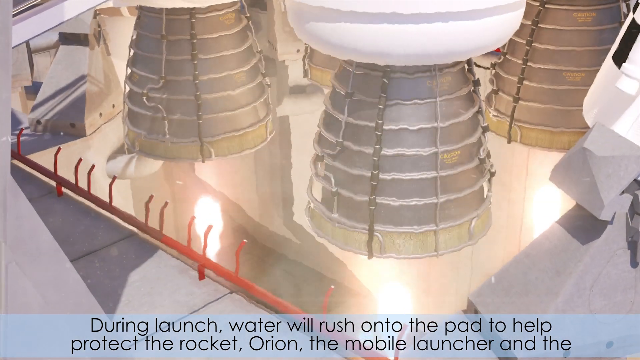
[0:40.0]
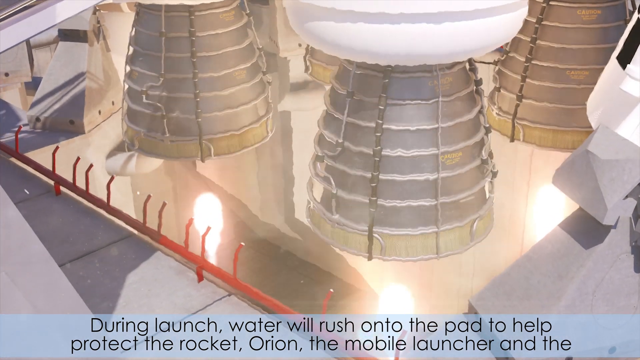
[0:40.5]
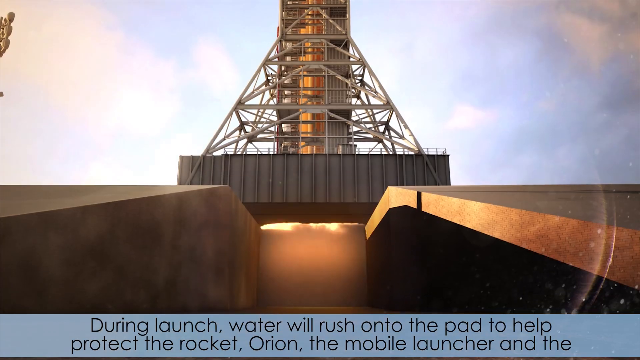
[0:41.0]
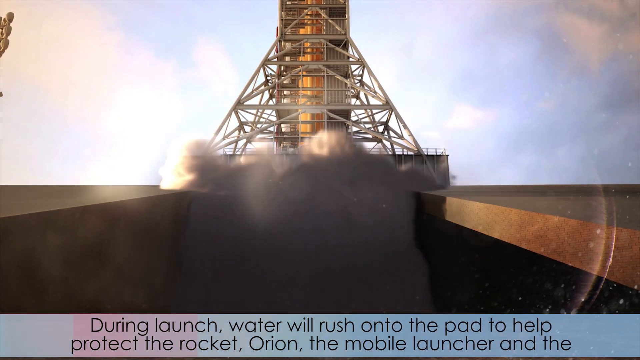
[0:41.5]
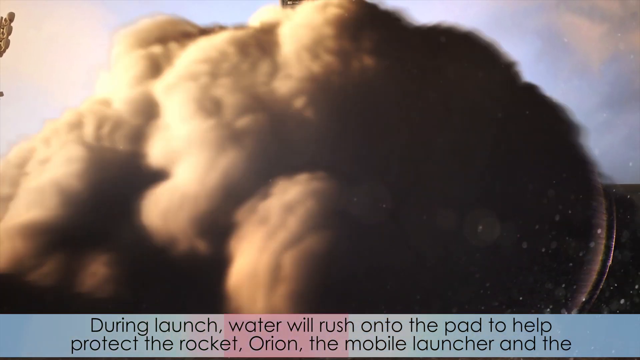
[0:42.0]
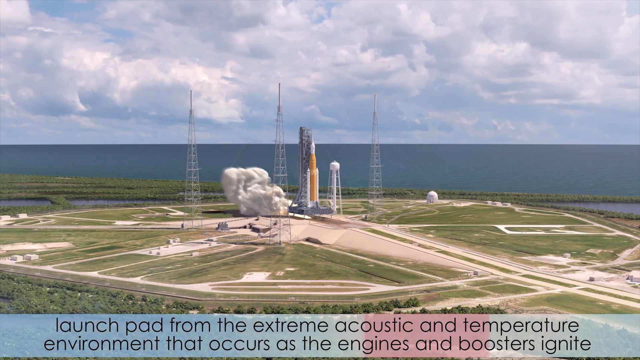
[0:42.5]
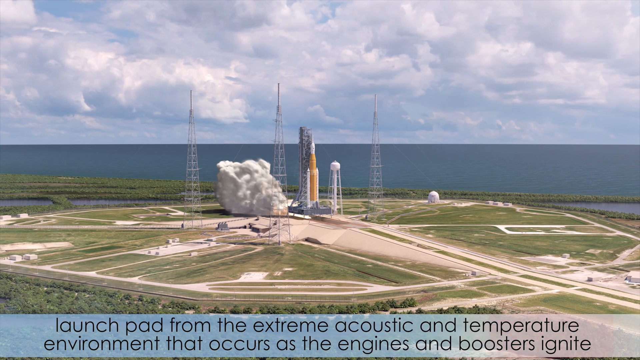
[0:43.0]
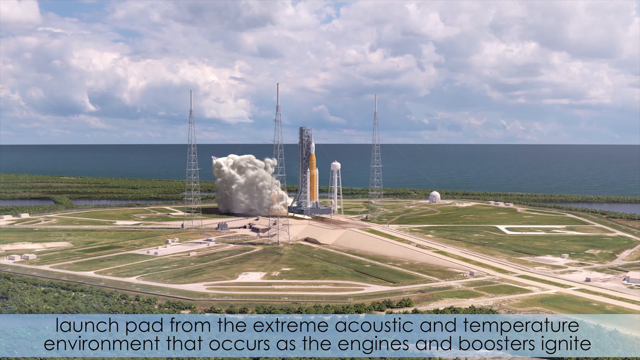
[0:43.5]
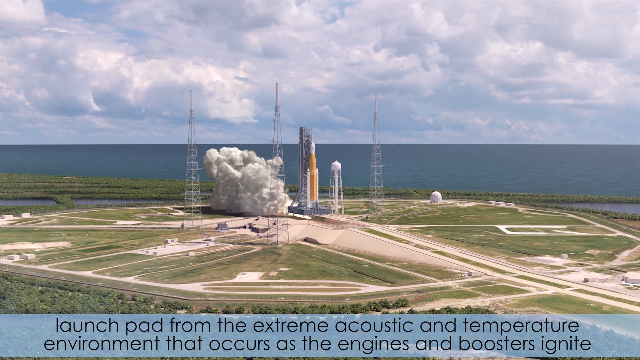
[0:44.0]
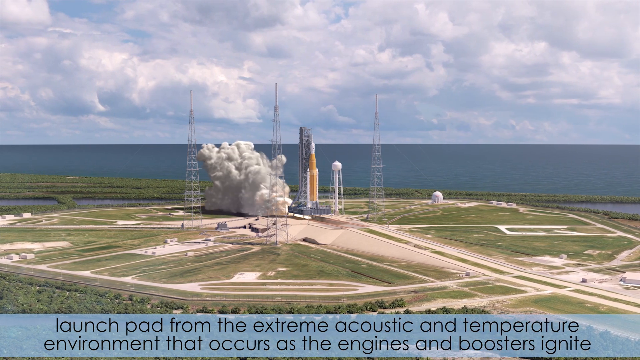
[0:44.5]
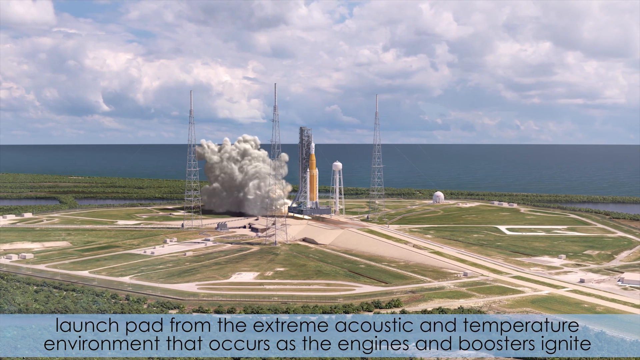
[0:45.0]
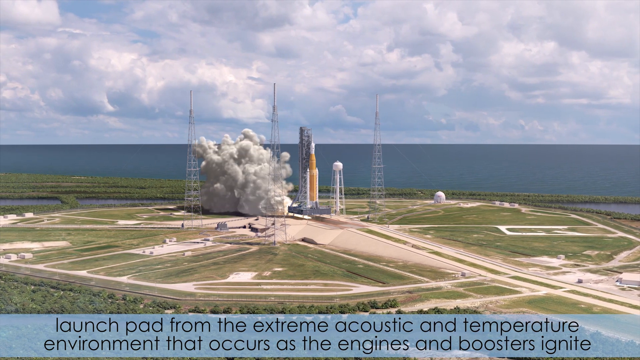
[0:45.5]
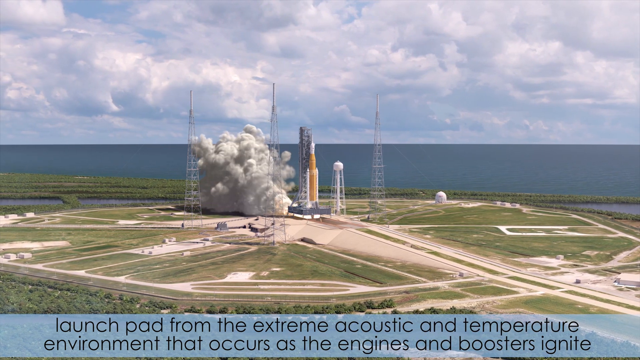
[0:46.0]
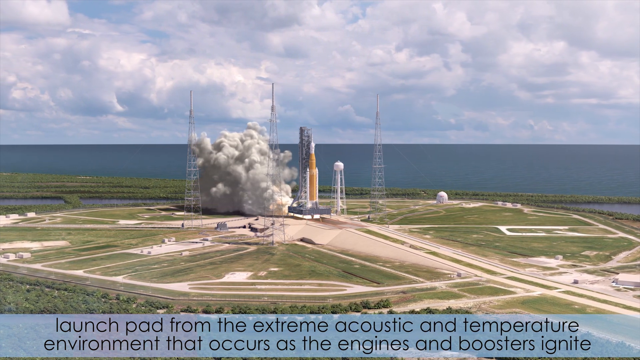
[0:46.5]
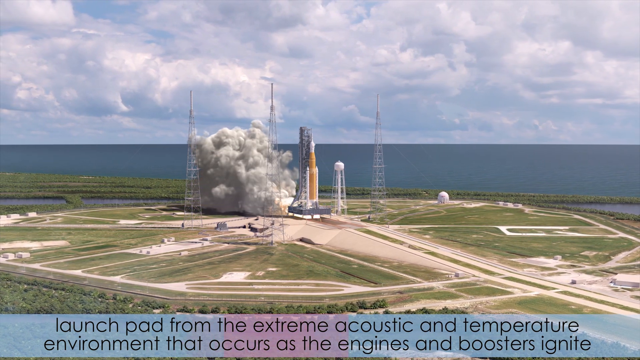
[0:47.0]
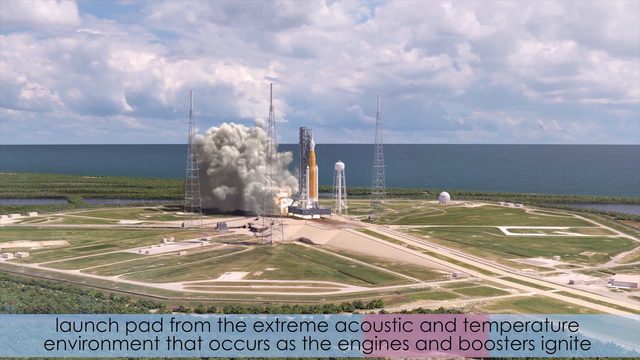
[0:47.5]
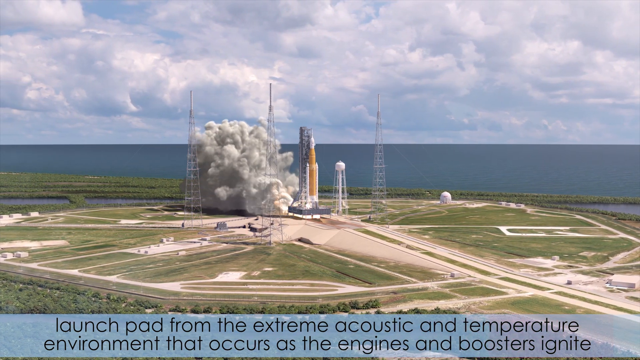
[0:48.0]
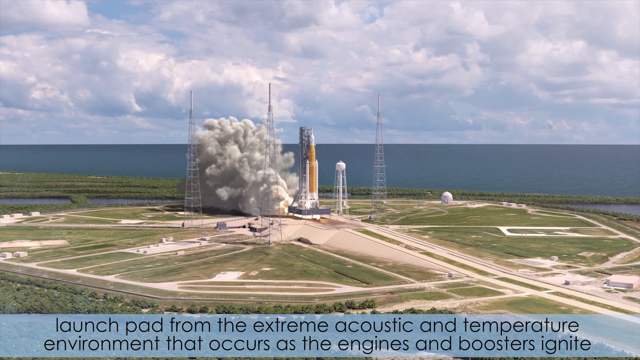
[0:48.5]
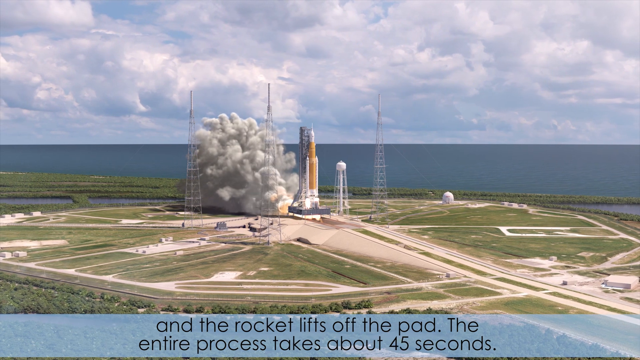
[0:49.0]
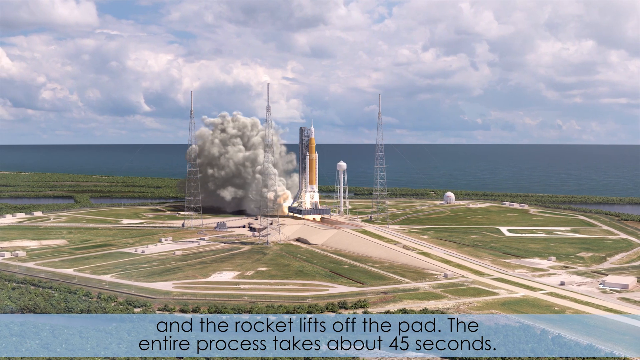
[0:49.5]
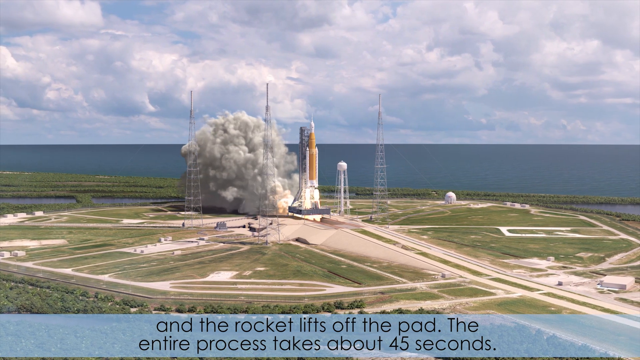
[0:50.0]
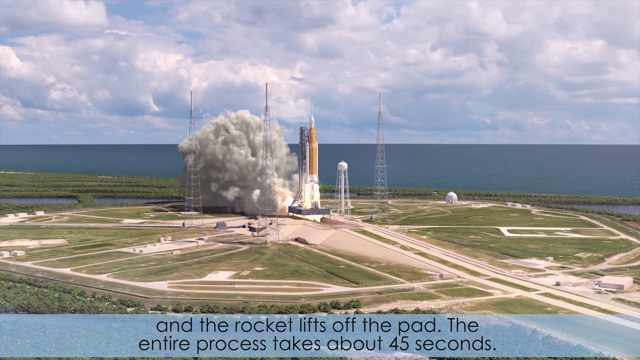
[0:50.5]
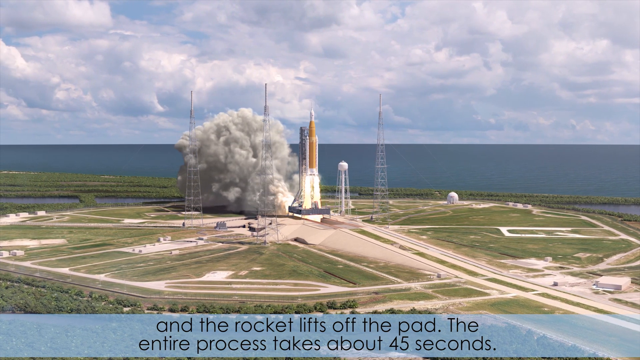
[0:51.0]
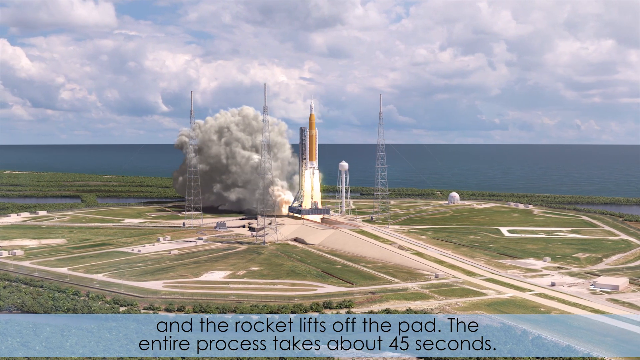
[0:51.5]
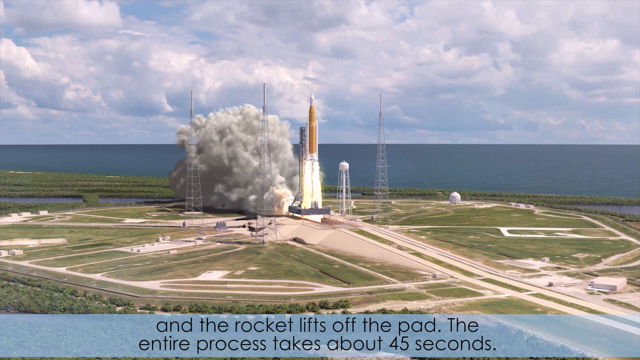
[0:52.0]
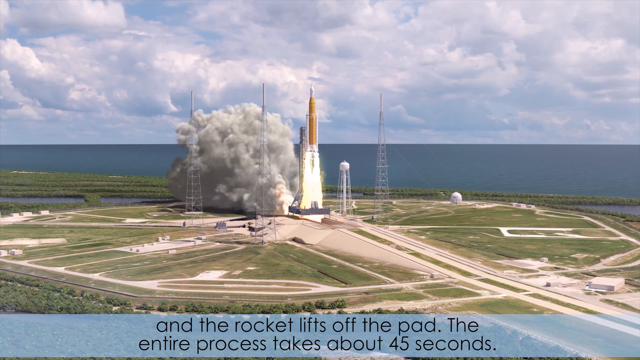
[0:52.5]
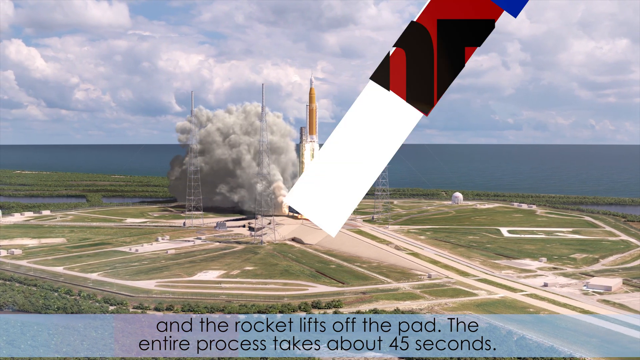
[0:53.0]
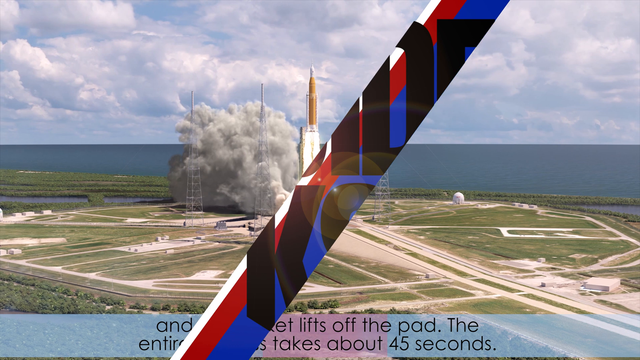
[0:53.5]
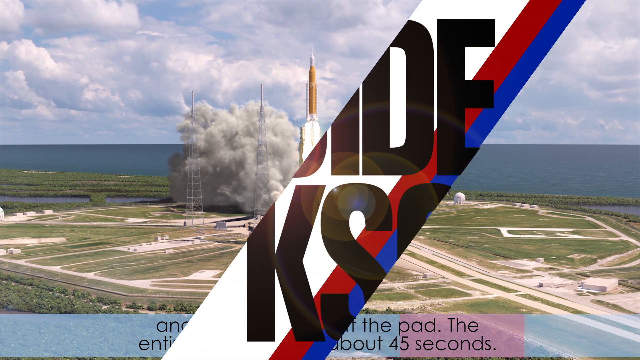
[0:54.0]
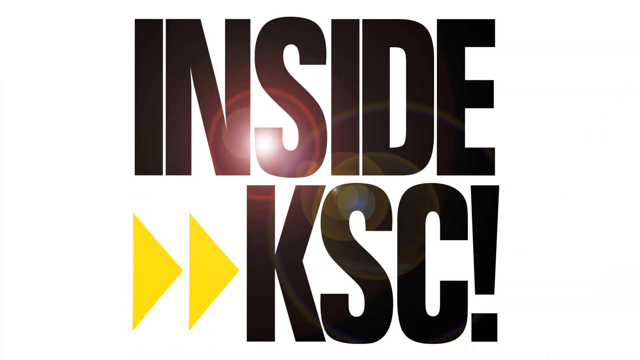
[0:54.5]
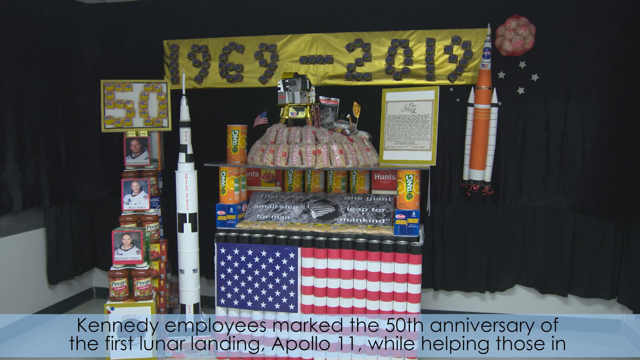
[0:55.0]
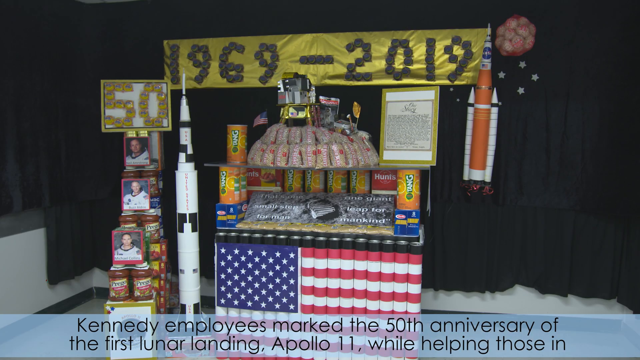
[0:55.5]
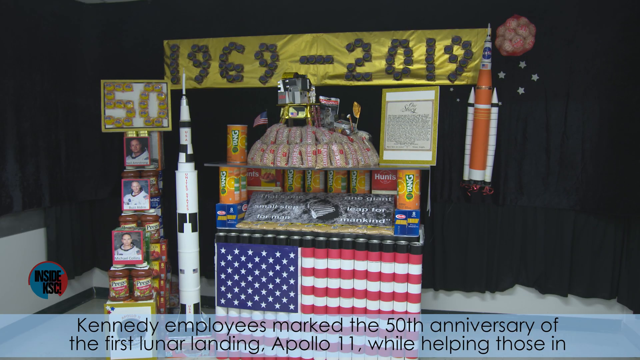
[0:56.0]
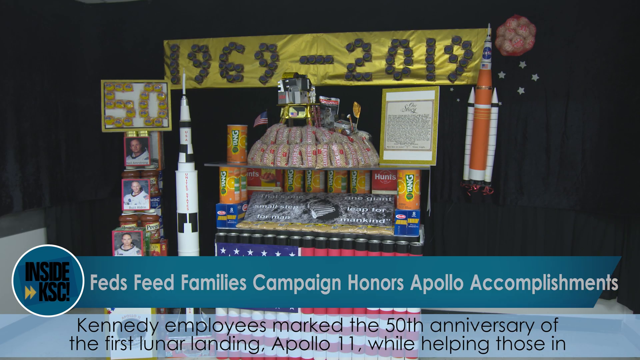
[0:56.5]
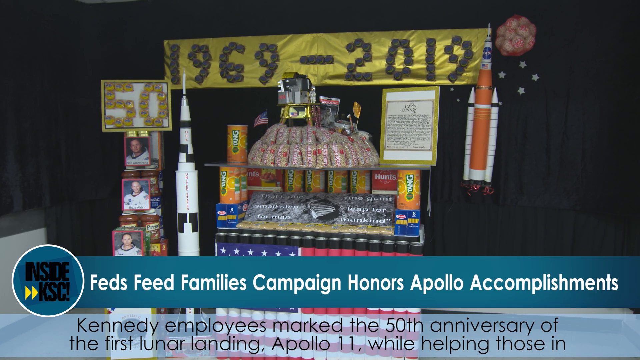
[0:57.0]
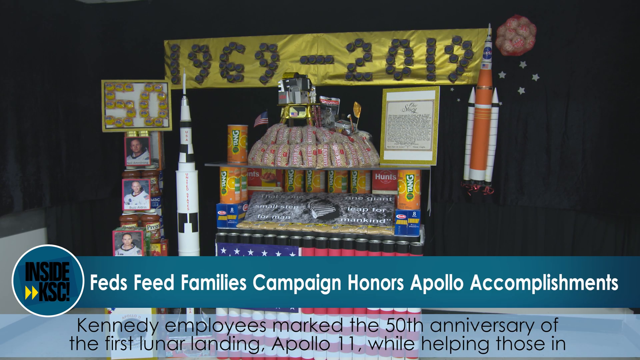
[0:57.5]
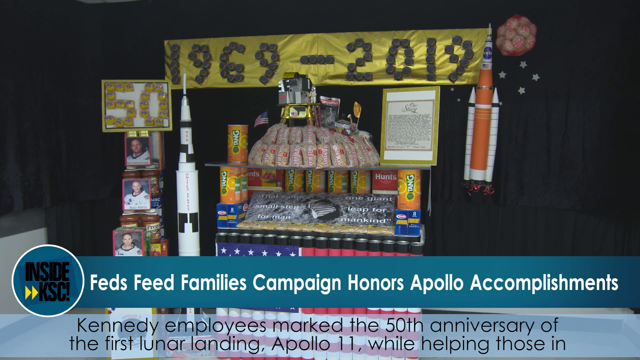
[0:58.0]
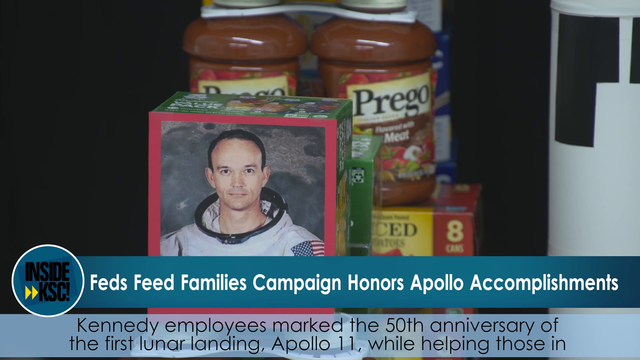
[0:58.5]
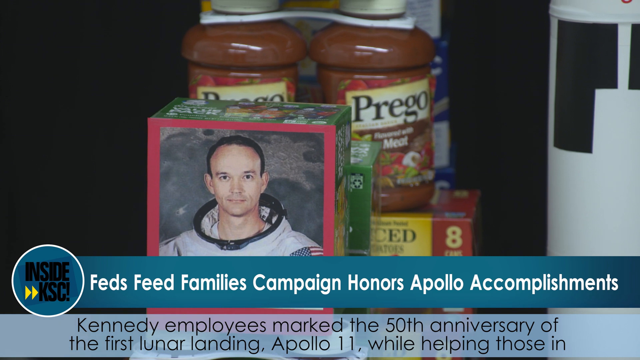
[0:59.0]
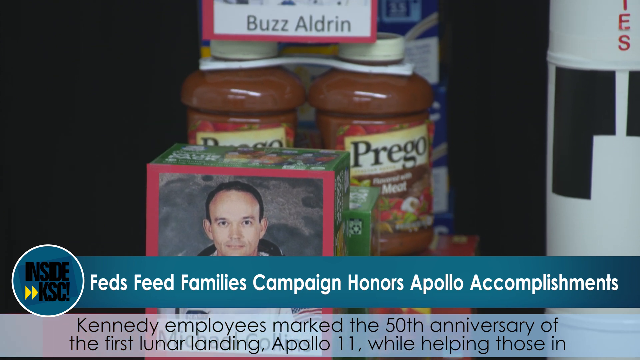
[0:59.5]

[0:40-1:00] A 3D rendering shows a four-thruster-engine rocket ship preparing to launch, with small flames coming out of every thruster, pointed downward. The rendering cuts to a large white cloud coming down a man-made concrete tunnel with an open top. It then zooms out of the model, showing the rocket ship preparing to launch on the scaffolding seen earlier, with a large white cloud coming out from the bottom of the rocket ship and being diverted toward the left of the screen. Text at the bottom reads "launch pad from the extreme acoustic and temperature environment that occurs as the engines and boosters ignite". The render shows the engines and boosters igniting, with flames and large clouds of white smoke launched from it as the rocket starts to go up into the air, flames coming out of the thrusters underneath. The text changes and the rocket lifts off the pad. The entire process takes about 45 seconds.